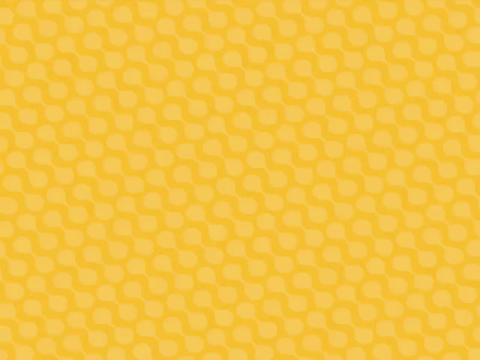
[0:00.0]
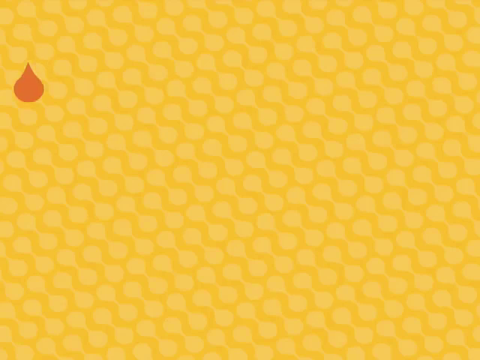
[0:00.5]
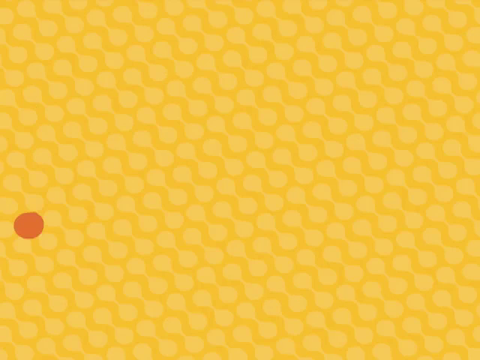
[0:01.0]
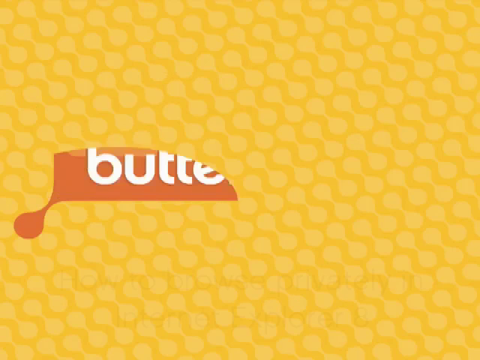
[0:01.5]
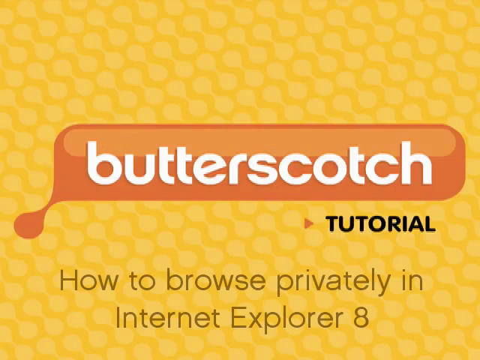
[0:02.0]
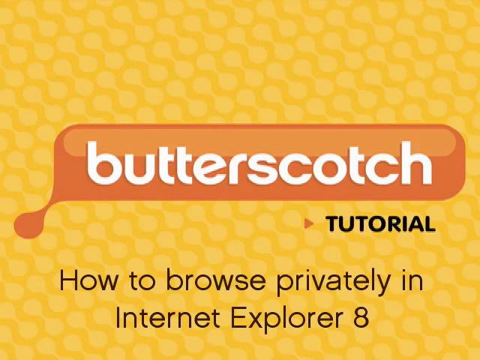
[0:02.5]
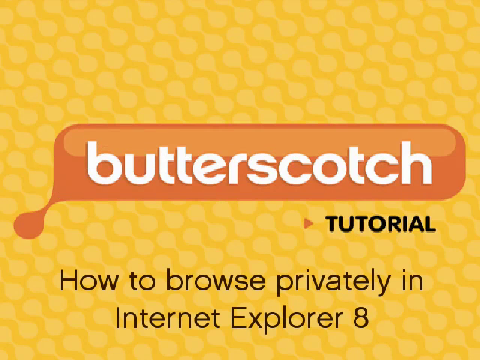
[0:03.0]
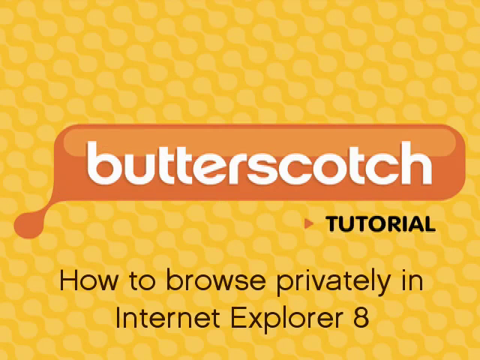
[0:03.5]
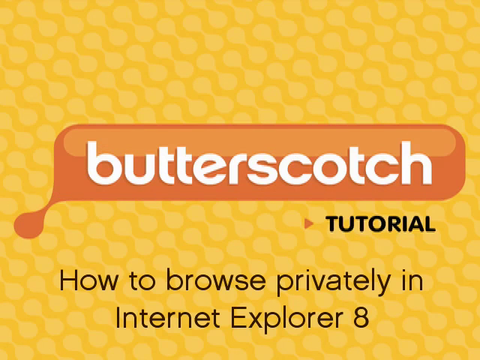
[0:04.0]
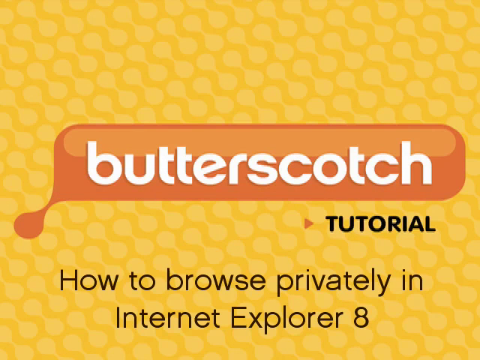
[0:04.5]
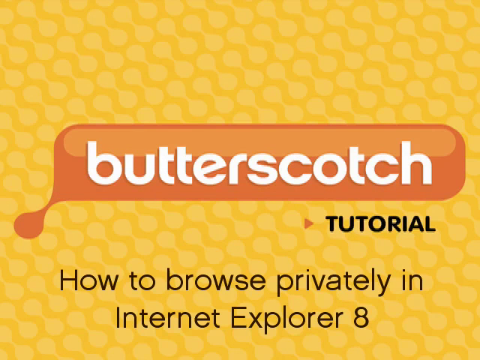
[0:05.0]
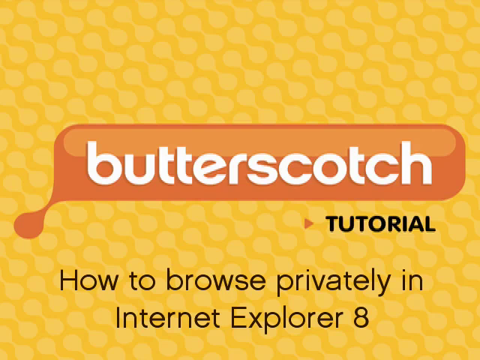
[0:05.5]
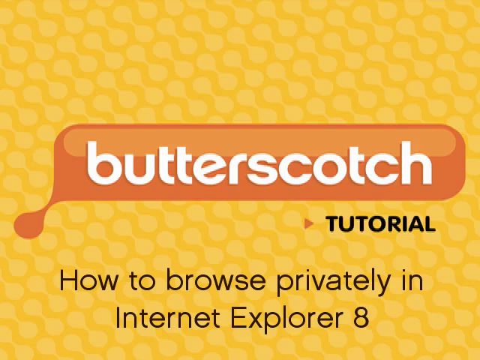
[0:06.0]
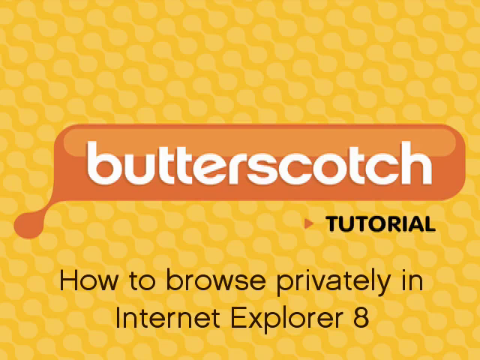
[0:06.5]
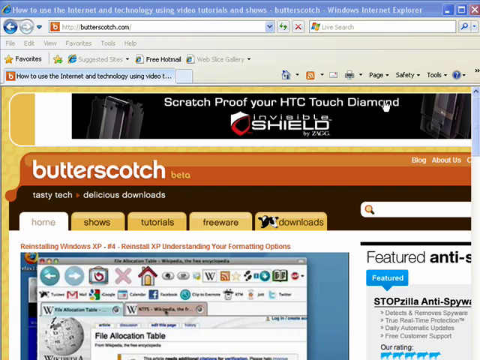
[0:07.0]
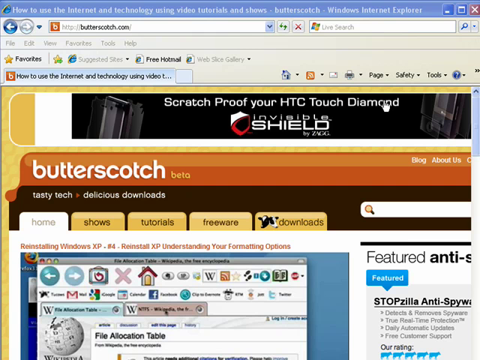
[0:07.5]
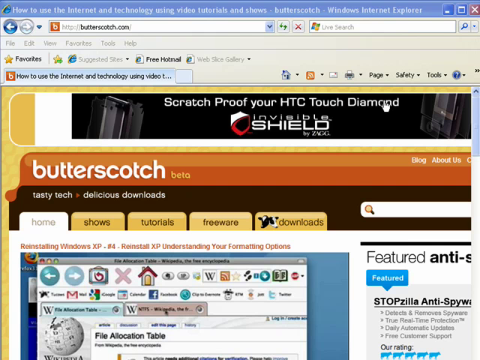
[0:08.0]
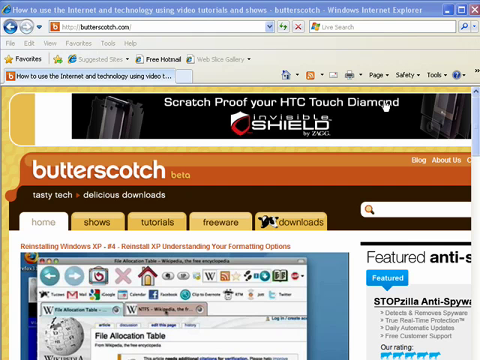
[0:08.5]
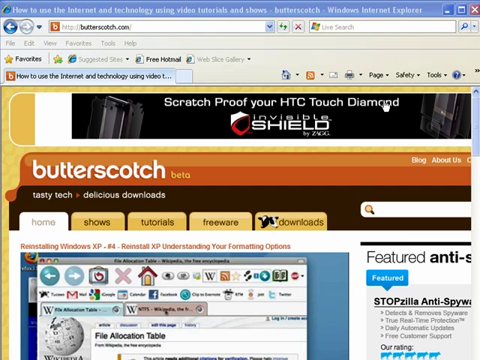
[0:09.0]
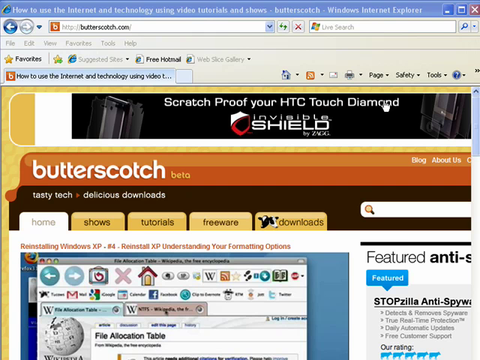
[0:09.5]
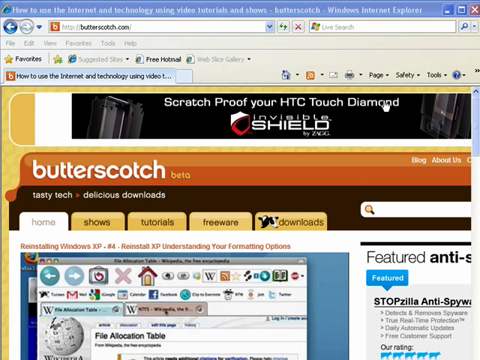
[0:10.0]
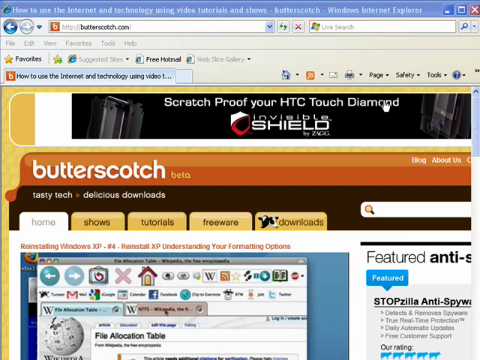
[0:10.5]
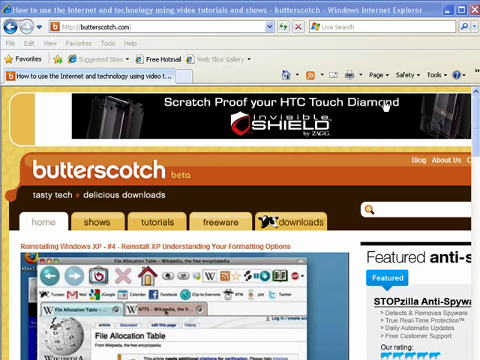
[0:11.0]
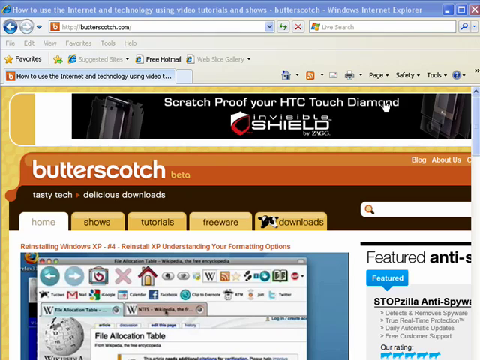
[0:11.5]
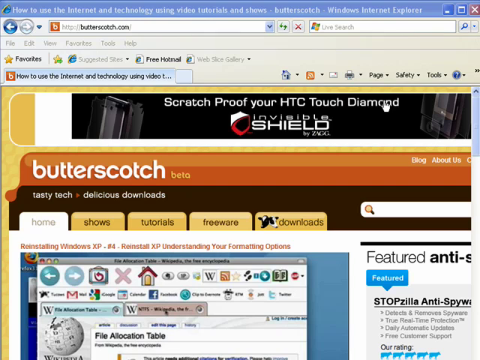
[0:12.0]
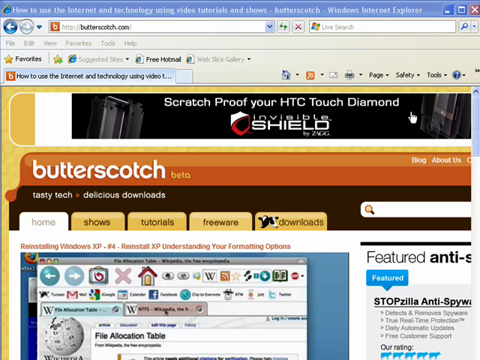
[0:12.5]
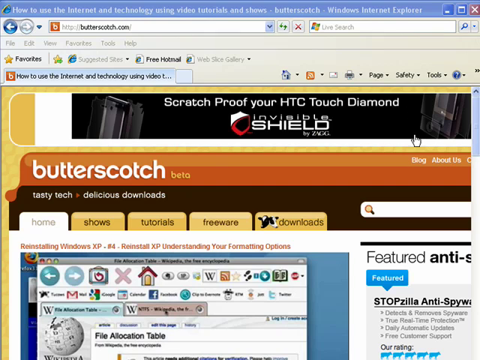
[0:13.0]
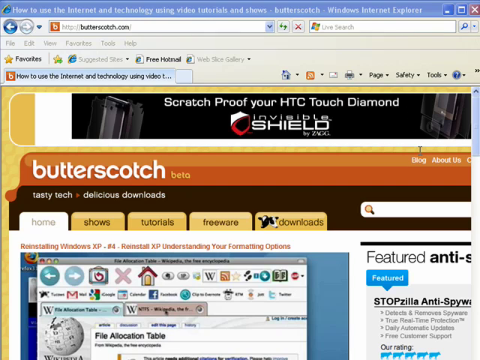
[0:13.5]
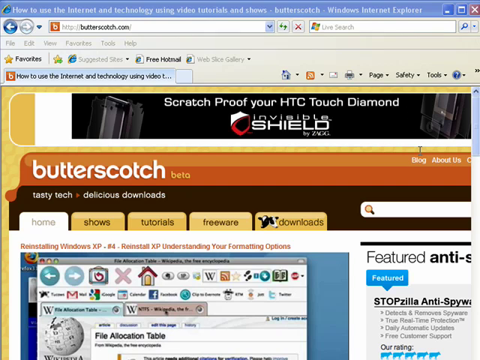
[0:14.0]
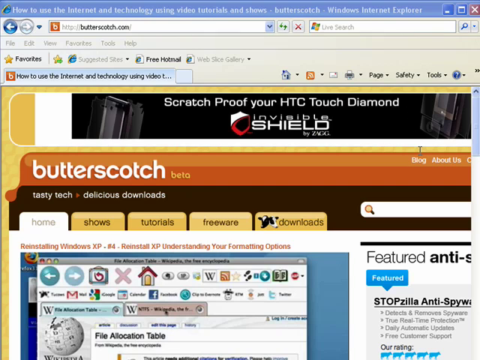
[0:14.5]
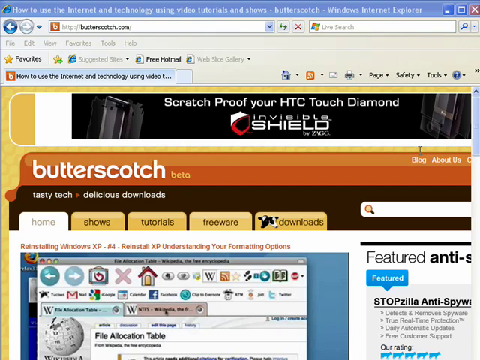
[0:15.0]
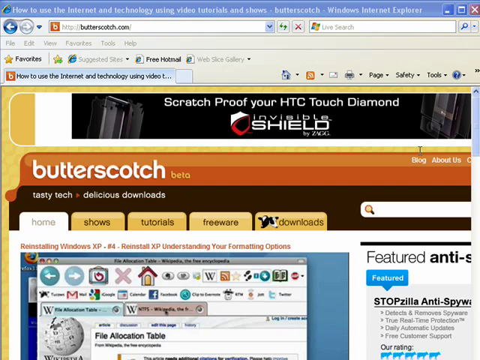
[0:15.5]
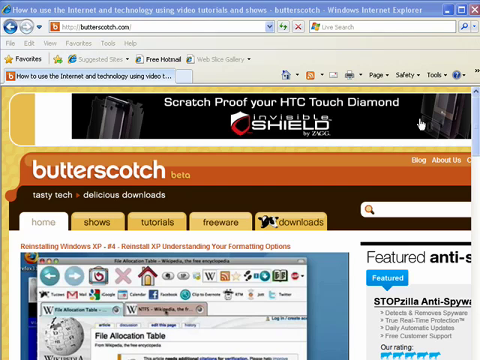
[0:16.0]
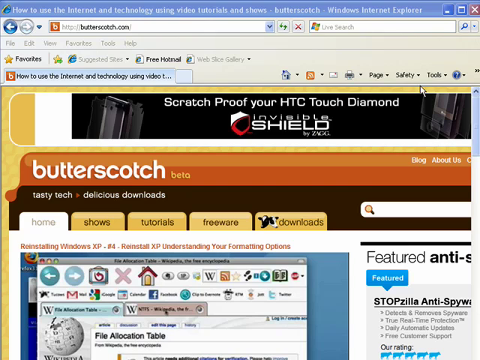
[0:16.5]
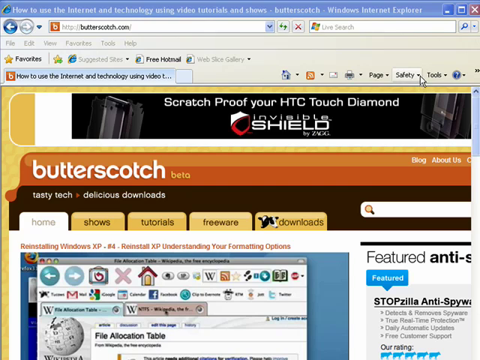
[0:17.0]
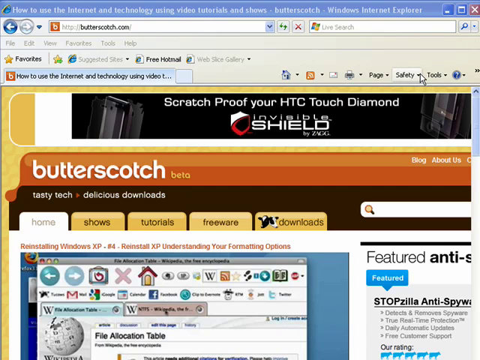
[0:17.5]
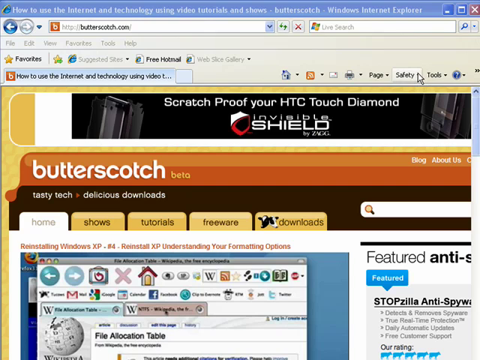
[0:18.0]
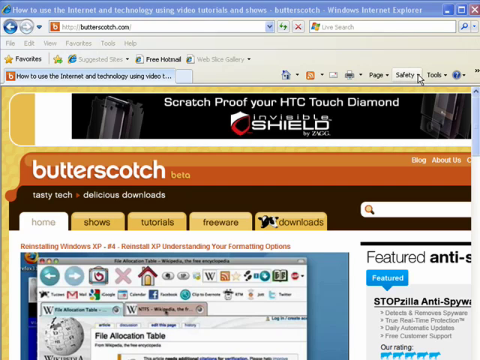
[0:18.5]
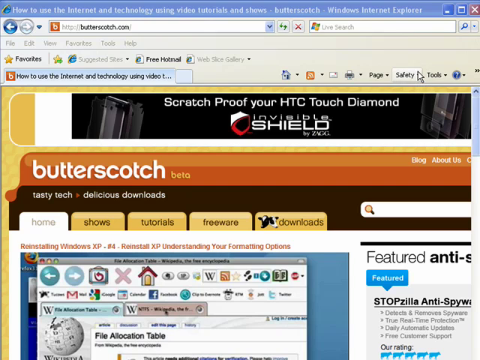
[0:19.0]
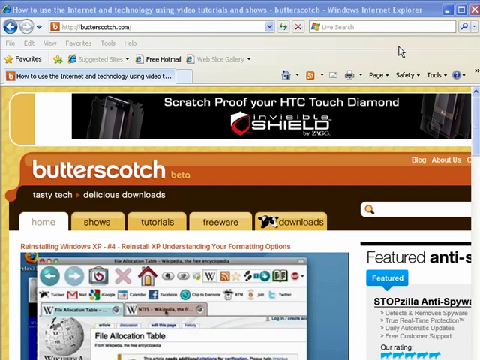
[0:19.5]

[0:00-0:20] An animation opens with a little drop on the screen that expands into a label reading "butterscotch." It is set on a big yellow background with a faded polka-dot pattern. The word "Butterscotch" sits on an orange, label-like background connected to the droplet from the opening animation. Under it is the word "tutorial," and under that, "how to browse privately in Internet Explorer 8." The video then transitions to a screen recording of the webpage butterscotch.com, with the tab titled "how to use the Internet and technology using video." The view cuts off a bit. The screen is very busy, with a lot going on, and a cursor moves around, highlighting different areas of the webpage.